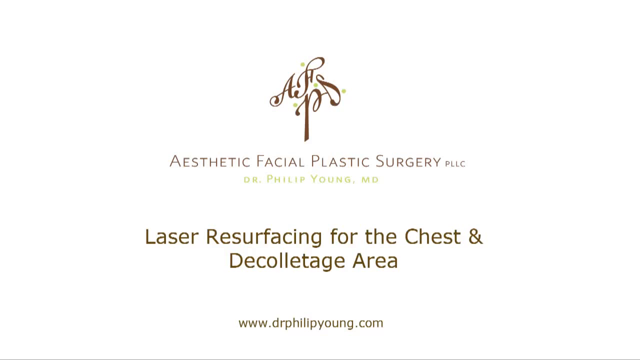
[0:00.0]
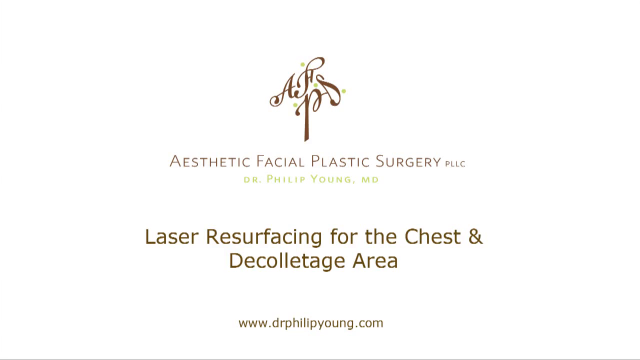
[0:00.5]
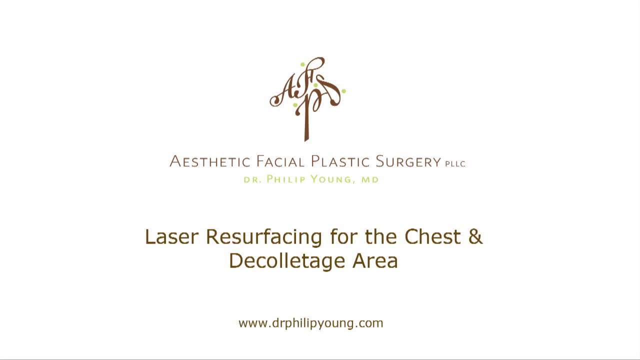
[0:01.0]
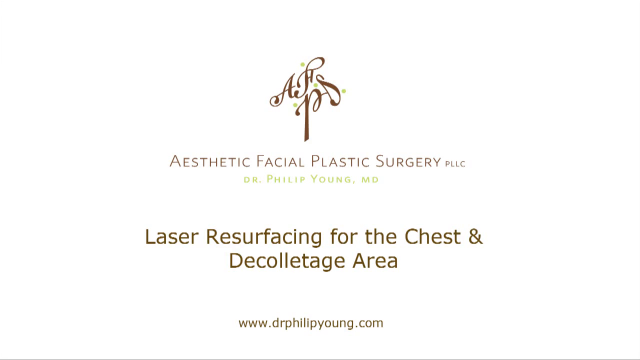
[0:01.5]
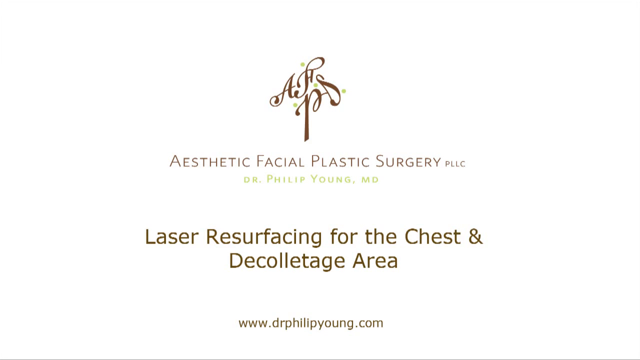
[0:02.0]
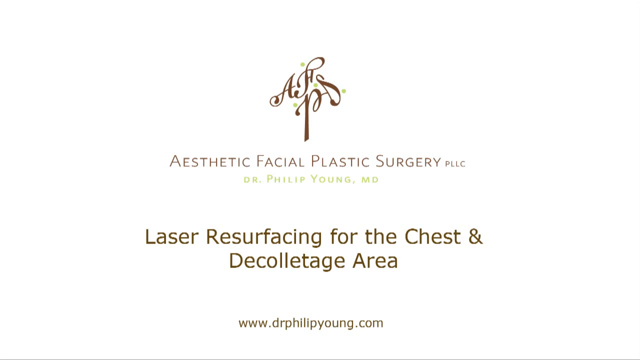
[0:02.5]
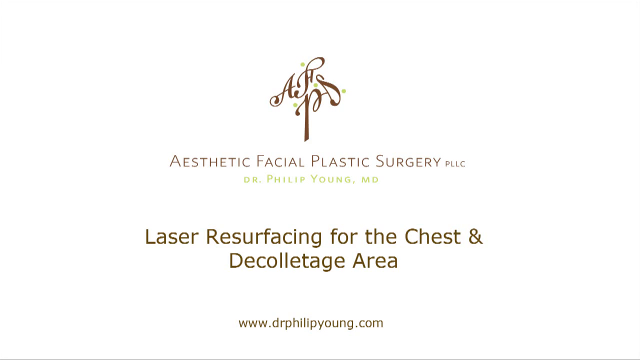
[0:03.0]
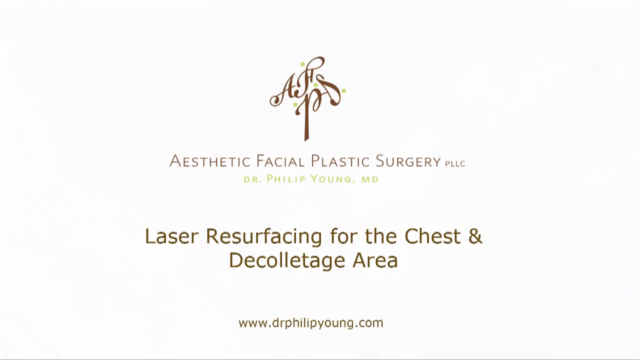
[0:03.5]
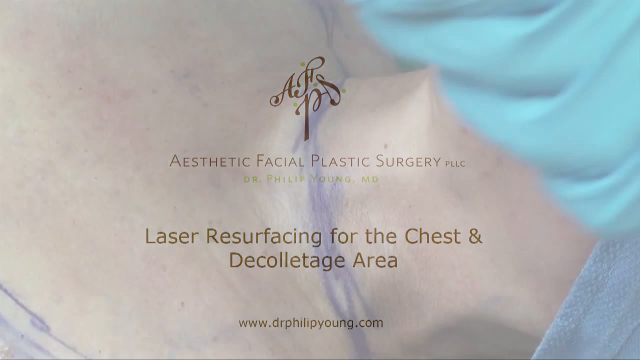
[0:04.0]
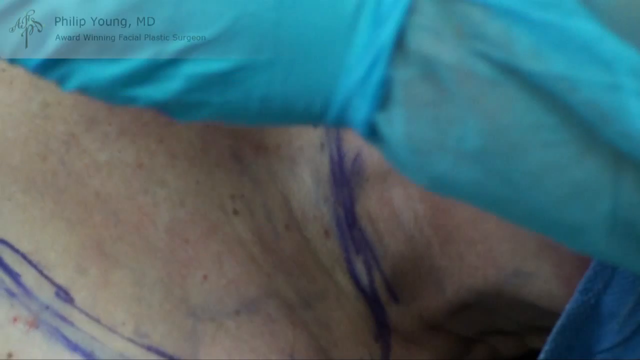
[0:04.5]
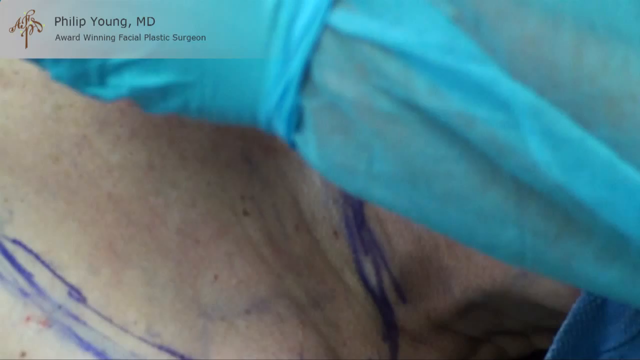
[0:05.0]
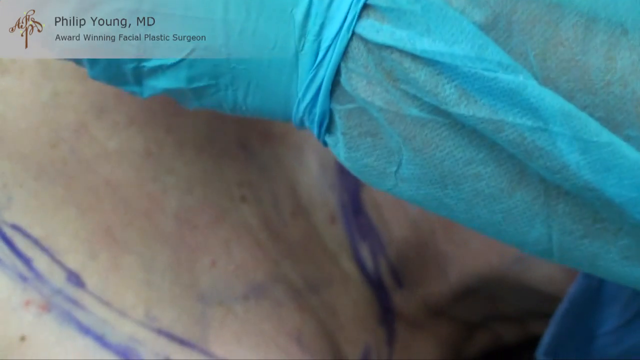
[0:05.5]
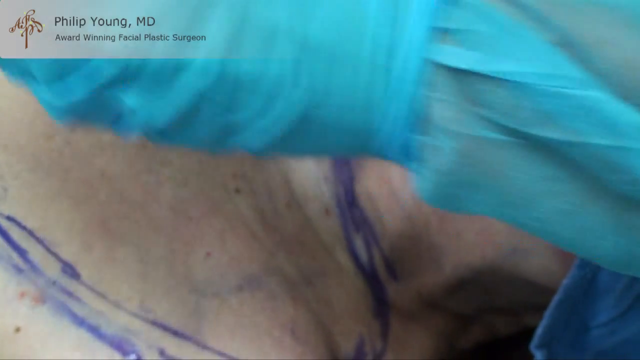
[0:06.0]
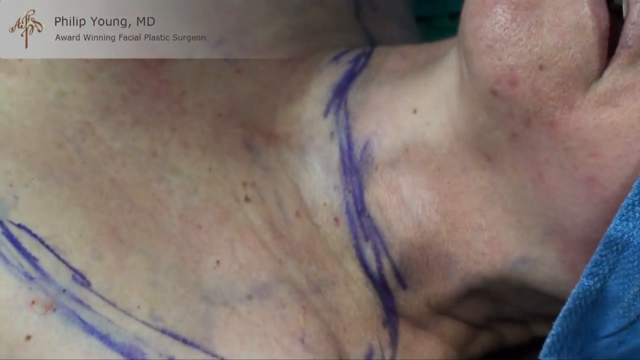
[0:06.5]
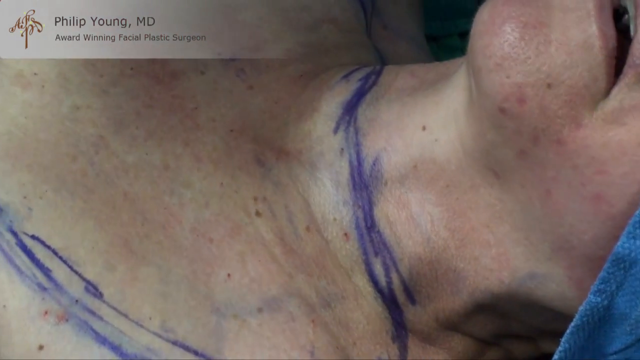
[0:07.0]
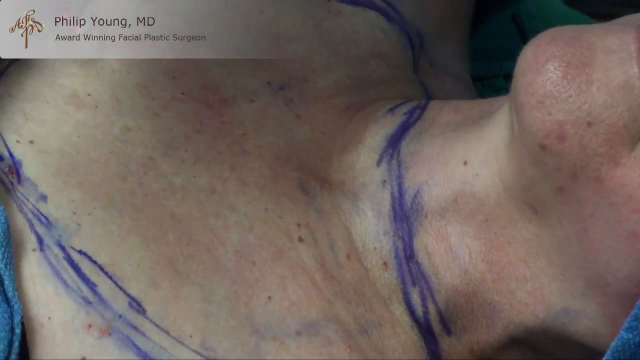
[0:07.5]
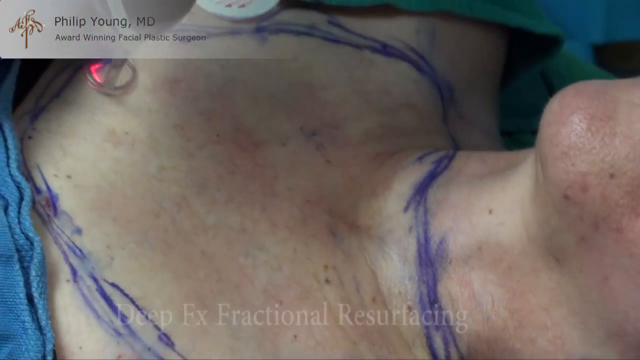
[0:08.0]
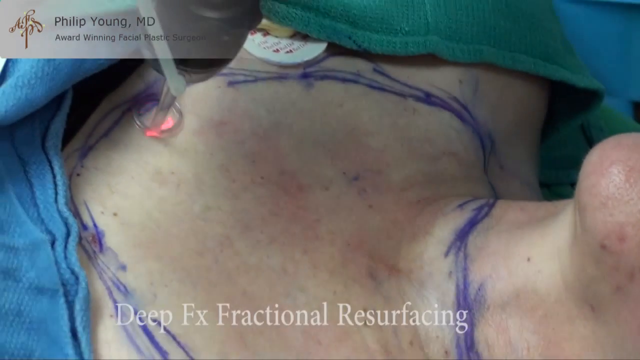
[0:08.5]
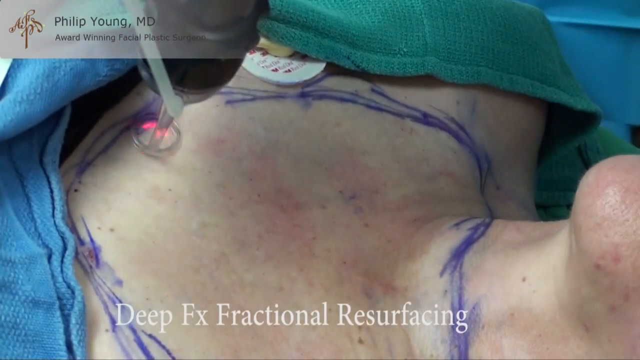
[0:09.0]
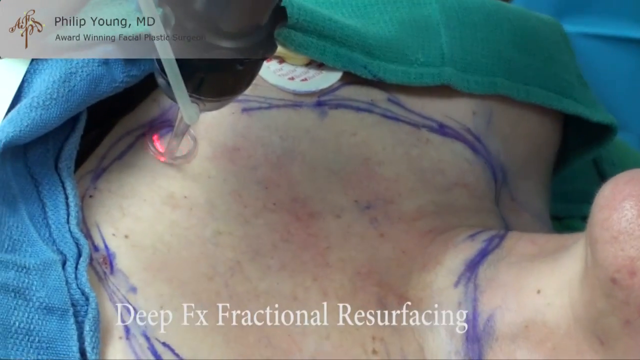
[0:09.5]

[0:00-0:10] A white background shows a brown tree that is made up of letters such as A, P, H and S, with some little green dots. Brown and green text reads "Aesthetic facial plastic surgery, PLLC, Dr. Philip Young, MD, laser resurfacing for the chest and the colitage area, www.drphilipyoung.com". The video then transitions to a doctor. A person's skin has a lot of blue ink on it, around the neck area and the chest. A transparent banner at the top of the screen has brown text reading "Philip Young, MD, award-winning facial plastic surgeon". The camera moves to show a little device with a ring that sort of spins a little red light in a circle, and white text at the bottom labels it "deep FX fractional resurfacing".